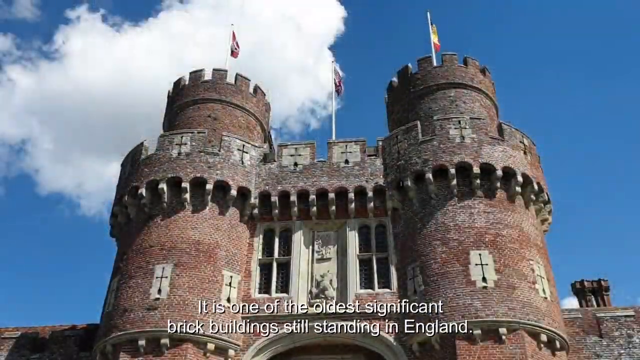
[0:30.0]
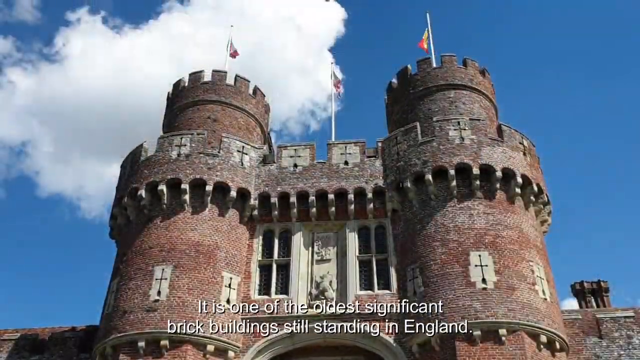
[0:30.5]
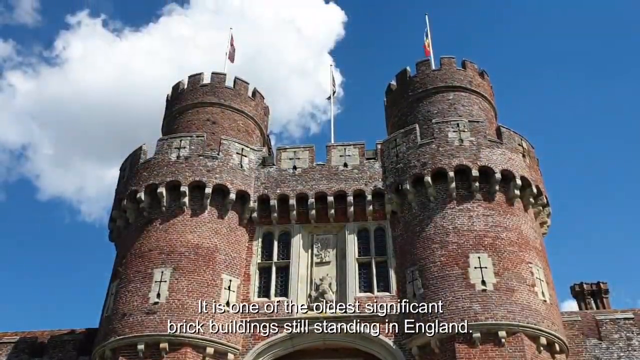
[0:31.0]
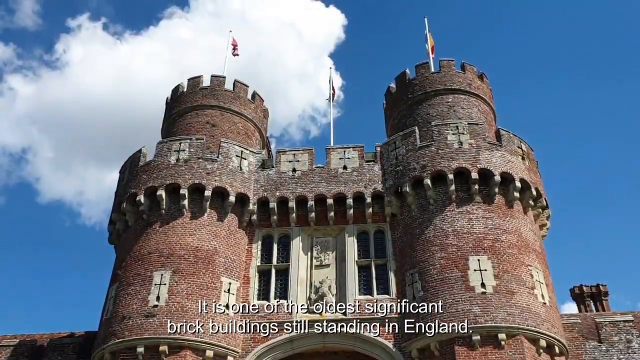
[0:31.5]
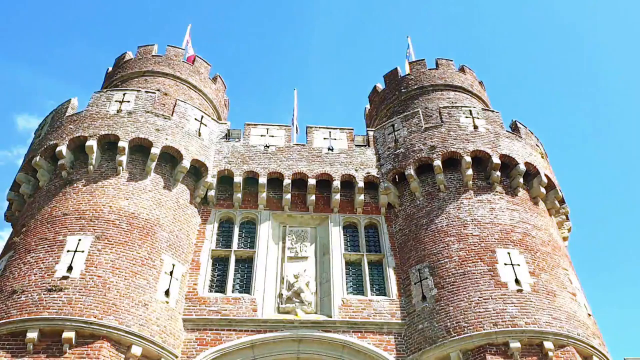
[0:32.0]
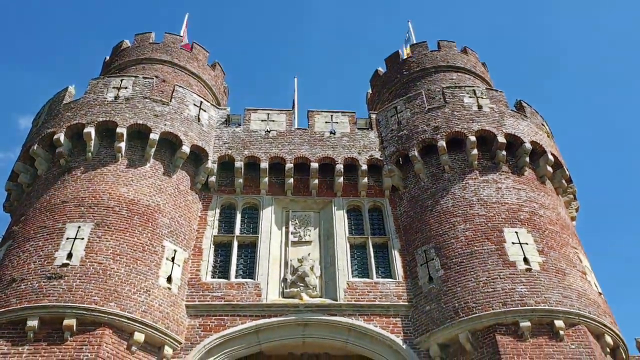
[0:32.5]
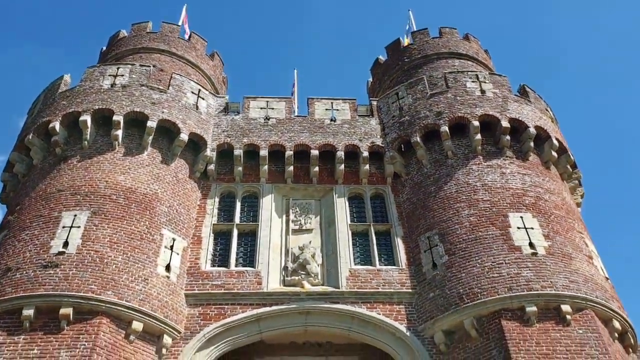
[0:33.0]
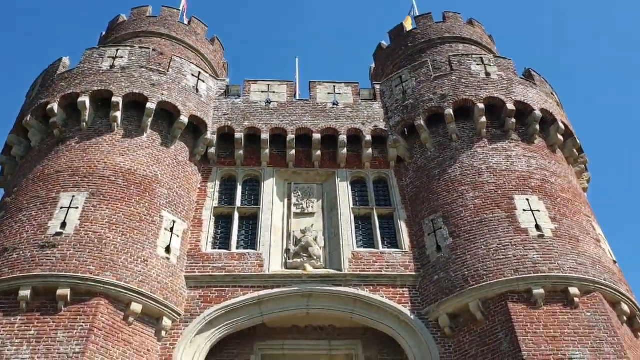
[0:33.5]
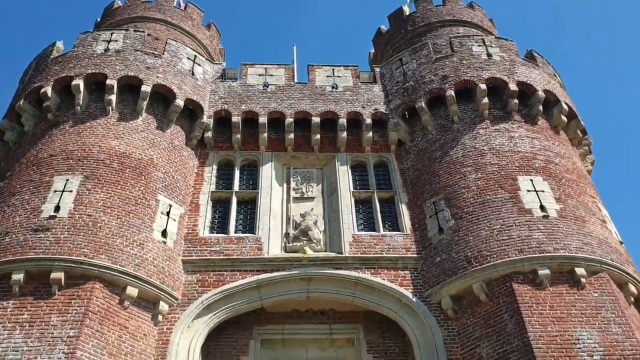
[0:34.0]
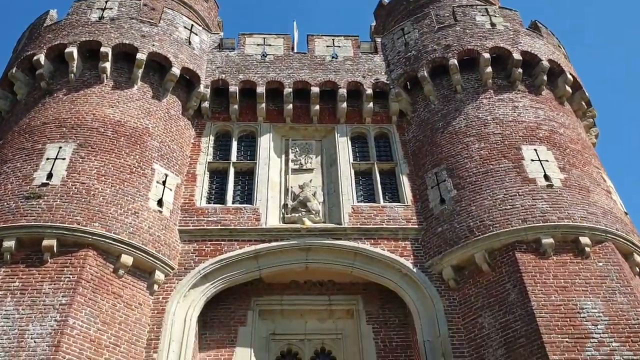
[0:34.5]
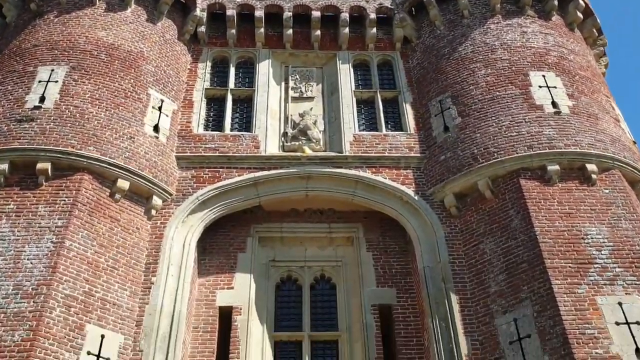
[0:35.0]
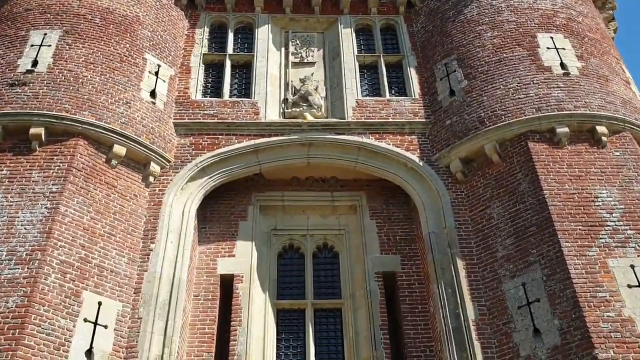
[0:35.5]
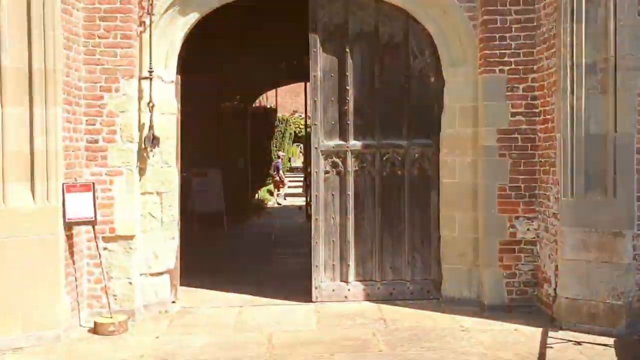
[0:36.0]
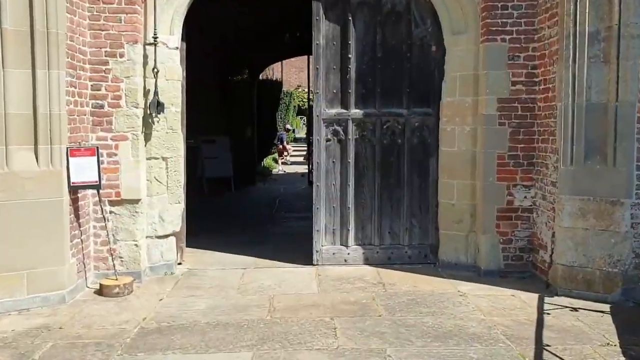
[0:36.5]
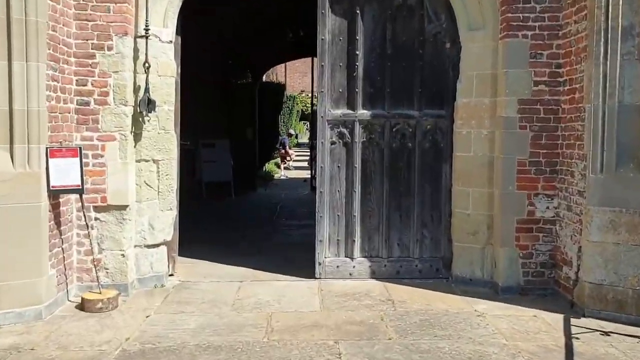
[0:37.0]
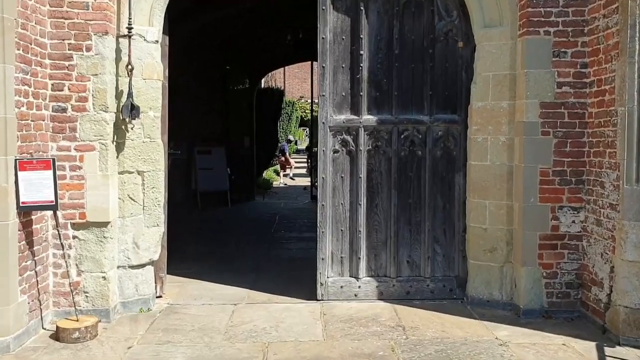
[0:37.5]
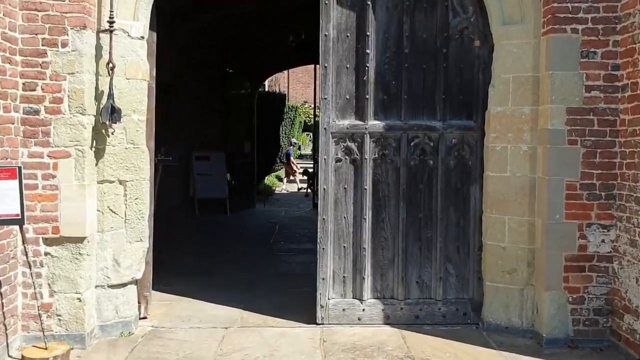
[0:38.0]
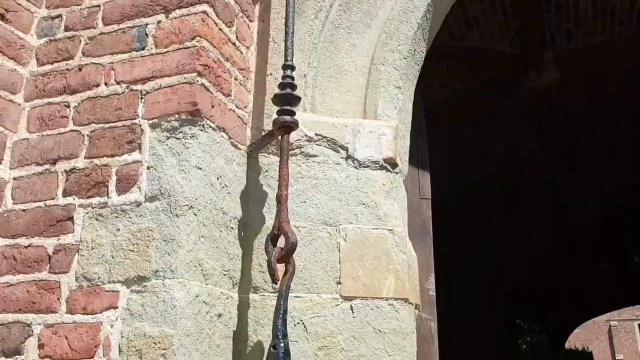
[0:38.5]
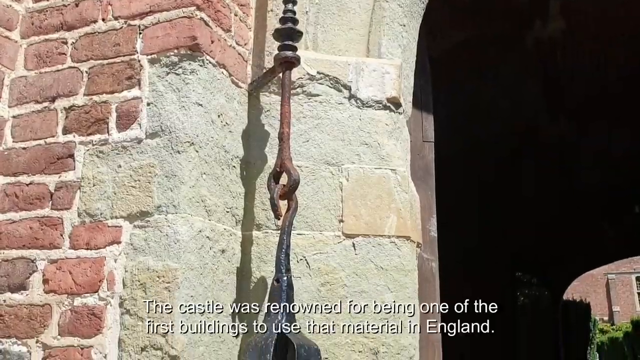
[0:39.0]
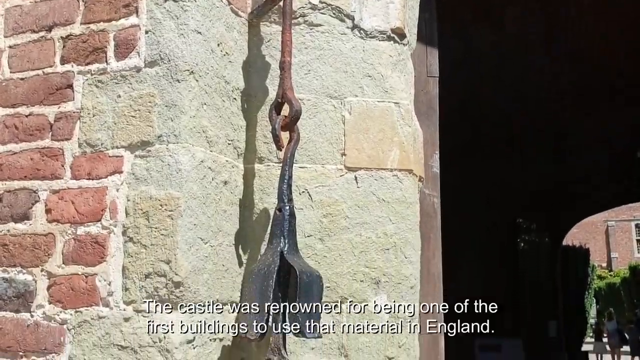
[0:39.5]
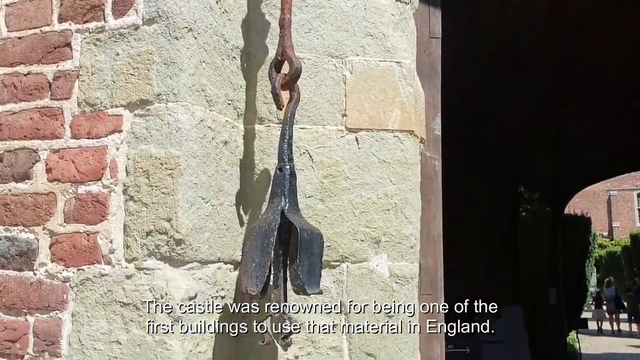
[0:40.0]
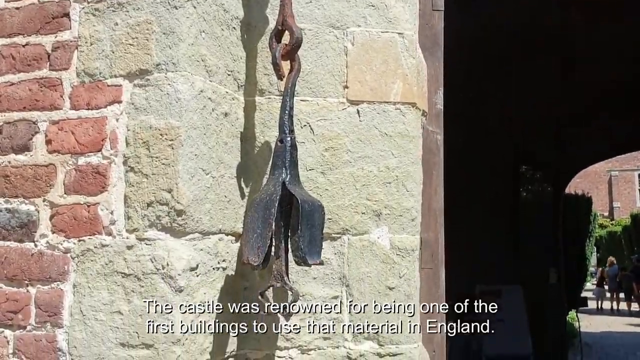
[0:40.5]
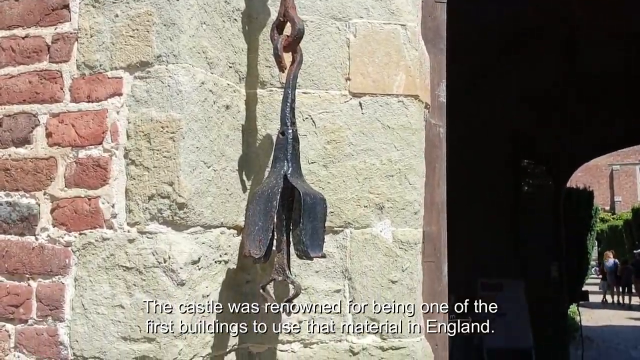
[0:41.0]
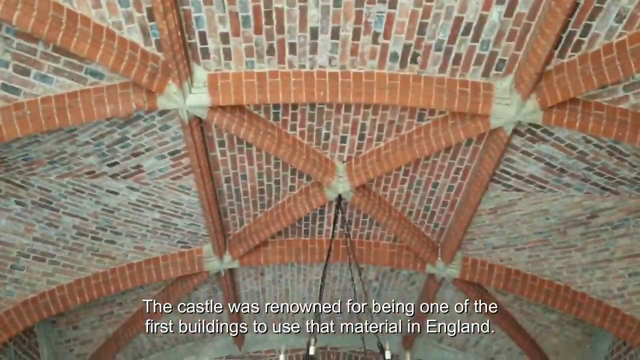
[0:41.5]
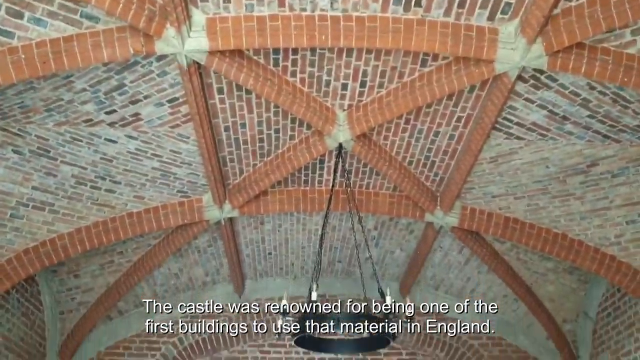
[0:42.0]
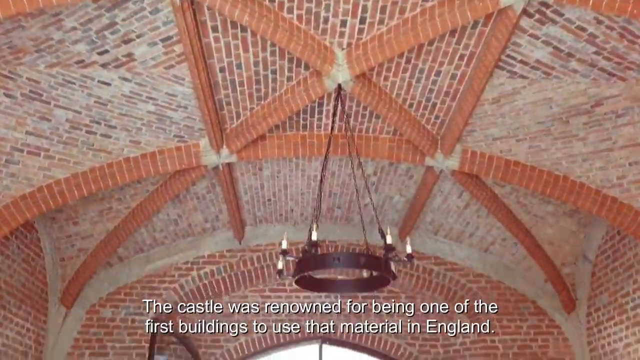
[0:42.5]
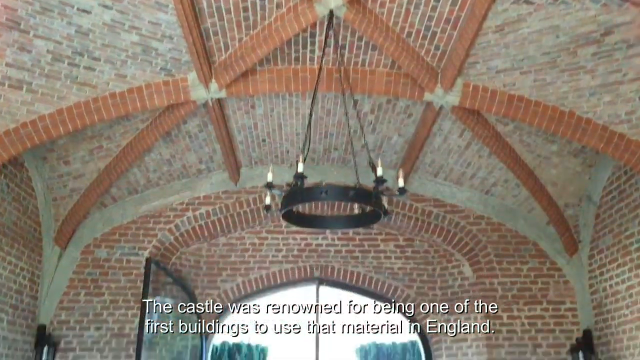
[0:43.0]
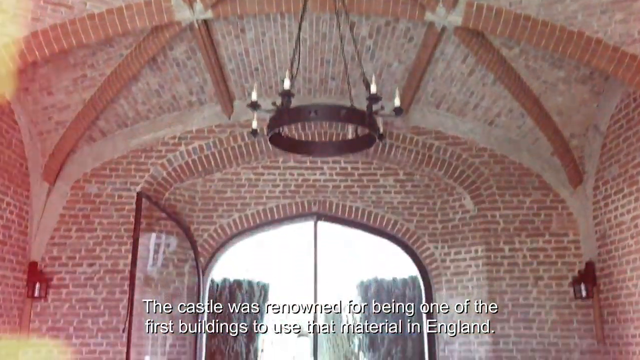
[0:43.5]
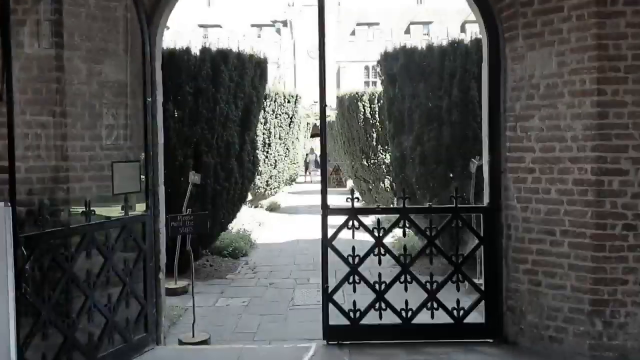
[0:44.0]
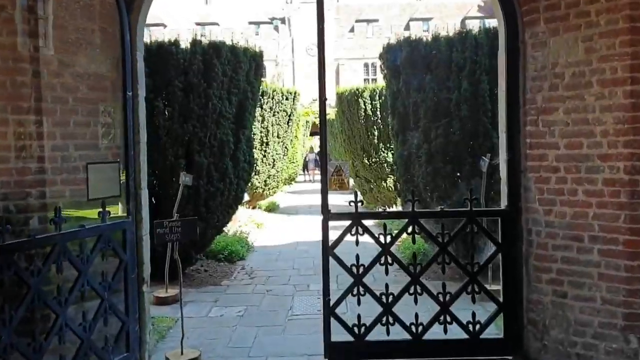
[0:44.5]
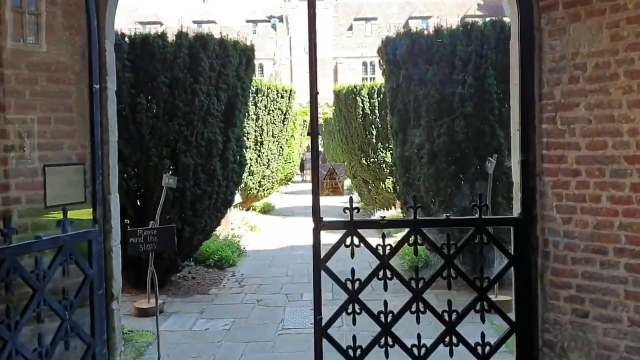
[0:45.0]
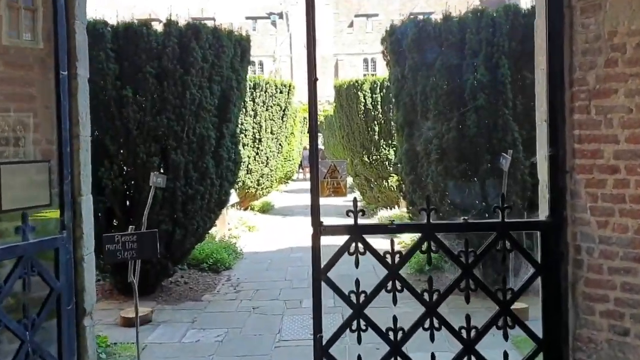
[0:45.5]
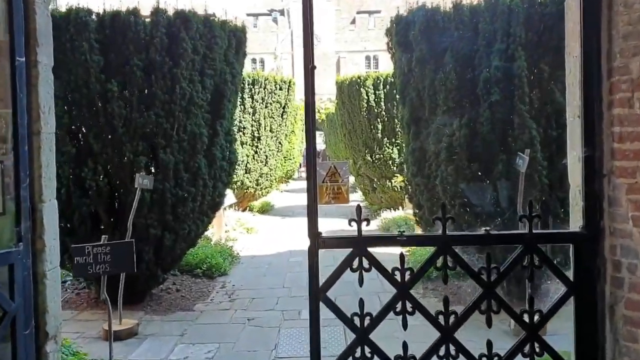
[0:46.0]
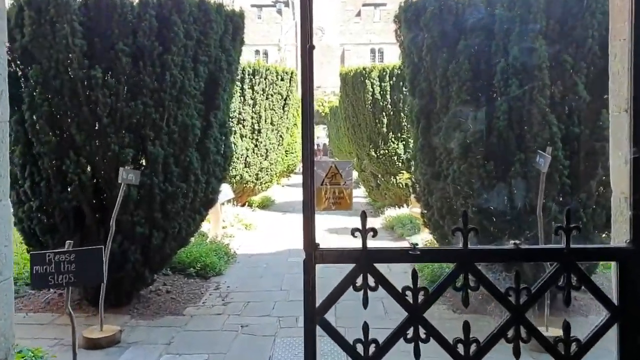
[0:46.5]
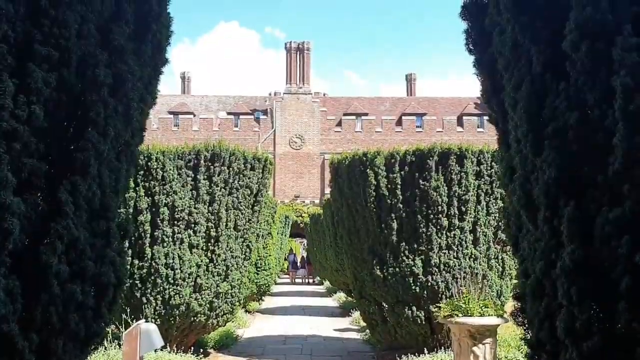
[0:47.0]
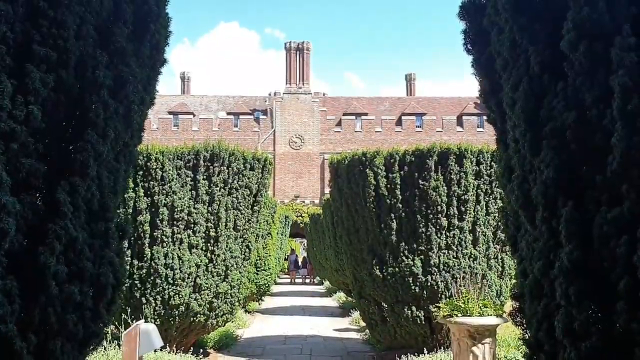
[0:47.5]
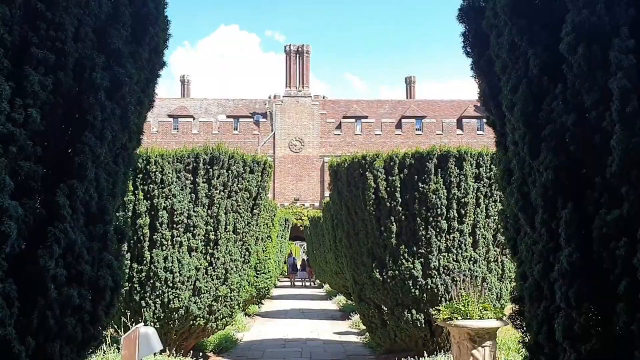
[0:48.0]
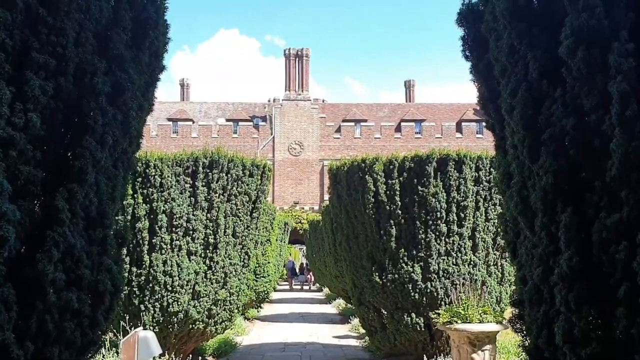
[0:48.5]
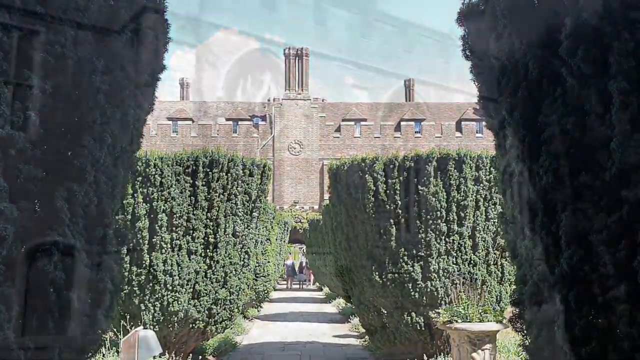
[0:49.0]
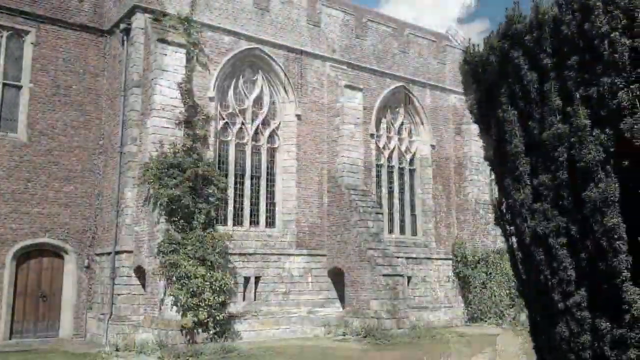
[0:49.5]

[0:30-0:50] The same castle is shown in more detail. The people seen earlier go inside the castle grounds, apparently with a child, and walk around looking at the gardens. Subtitles state that Herstmonceux Castle in Sussex dates from the 15th century, is made of brick, and is one of the few remaining buildings in the world made of this kind of brick. Flags are on top of the building.